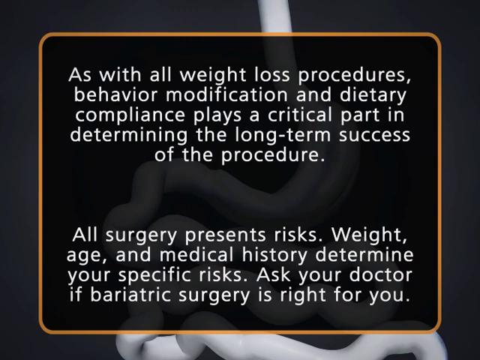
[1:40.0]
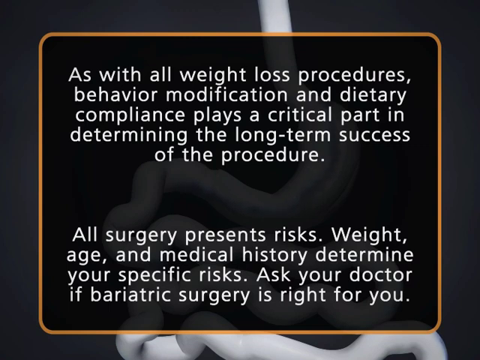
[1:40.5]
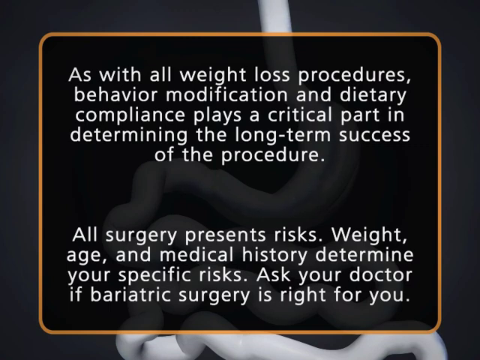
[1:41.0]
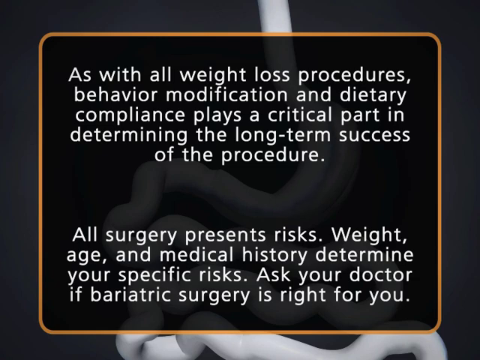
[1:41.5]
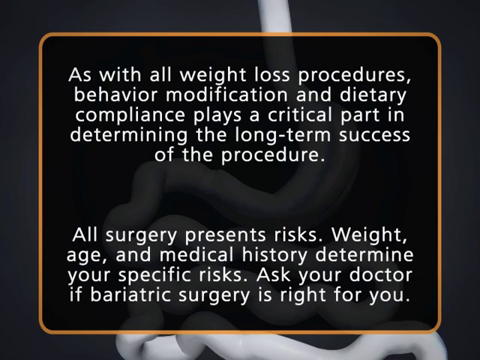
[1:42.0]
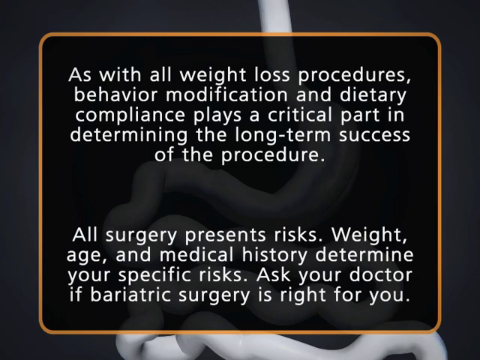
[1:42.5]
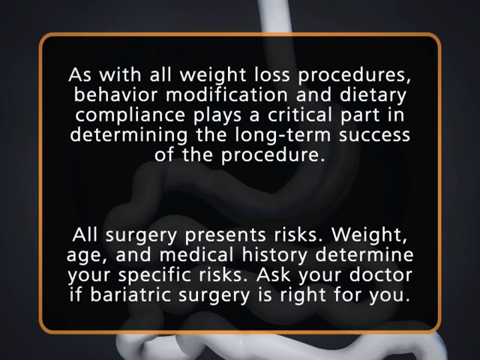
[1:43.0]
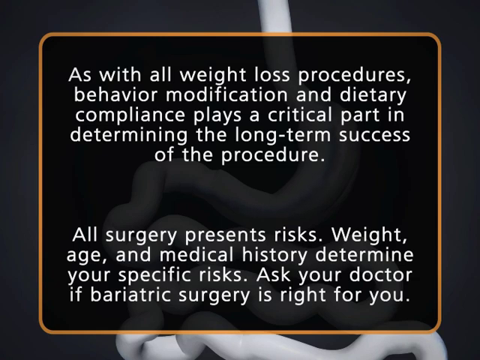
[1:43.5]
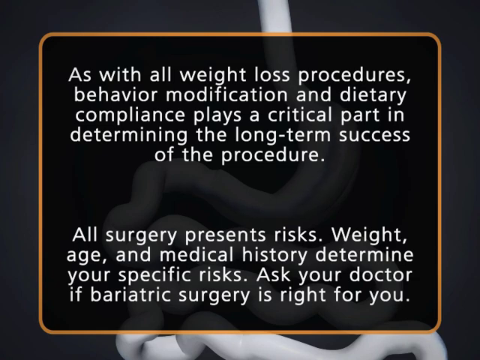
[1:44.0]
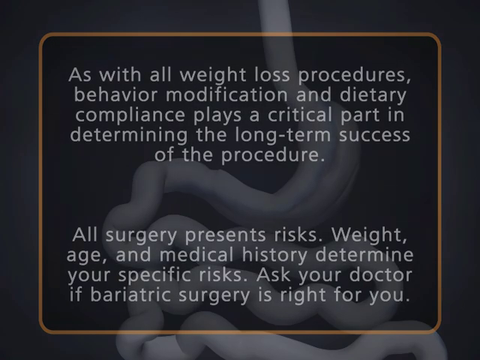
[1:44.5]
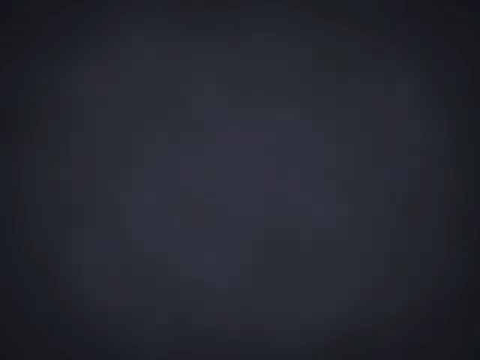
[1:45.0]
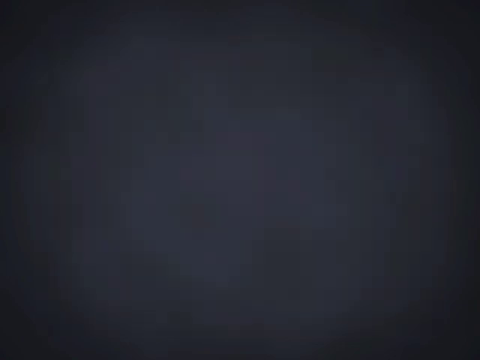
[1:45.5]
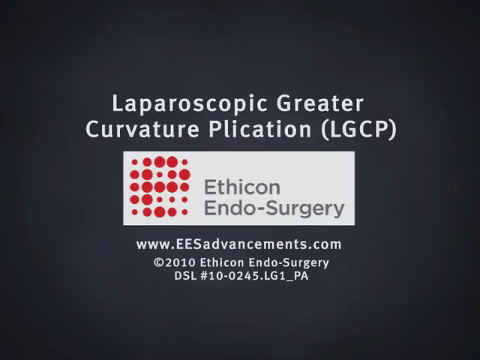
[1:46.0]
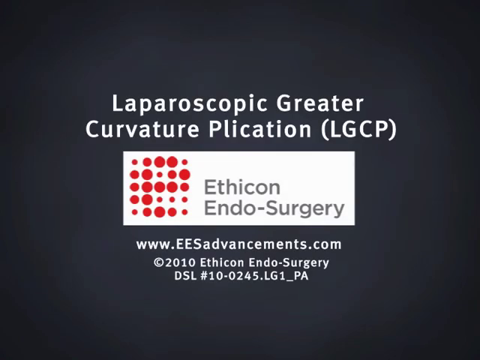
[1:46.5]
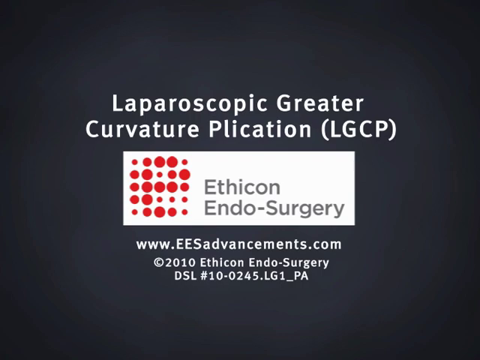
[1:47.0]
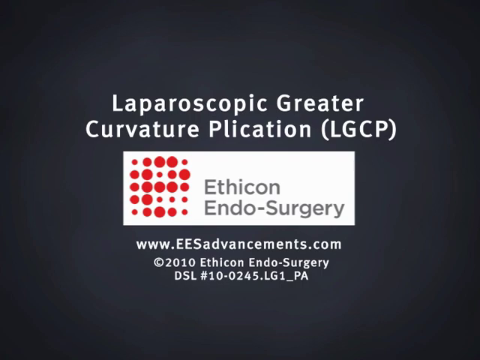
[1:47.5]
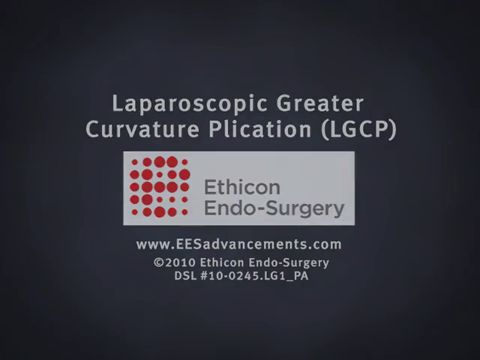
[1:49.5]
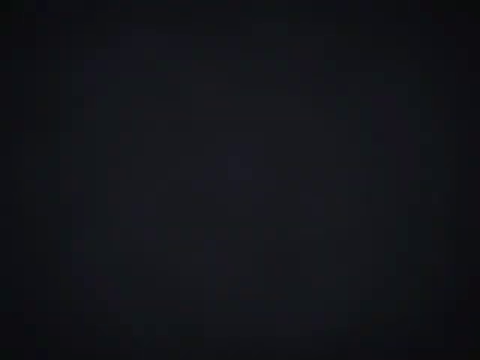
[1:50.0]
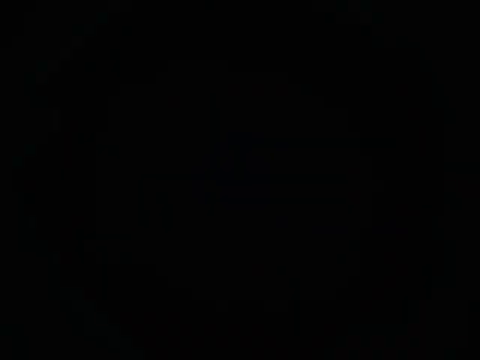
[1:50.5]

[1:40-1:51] The scrolling text reaches its end. It scrolls in front of an animation of a human stomach with the esophagus on top and the intestines below.